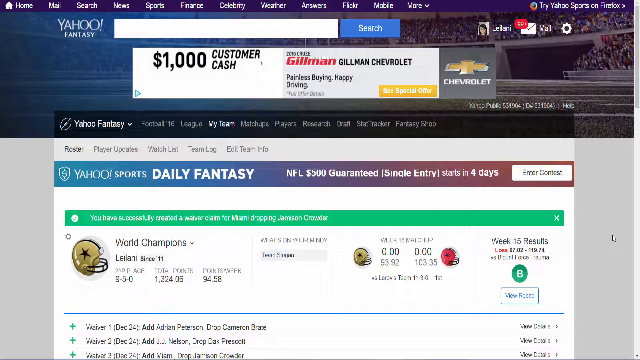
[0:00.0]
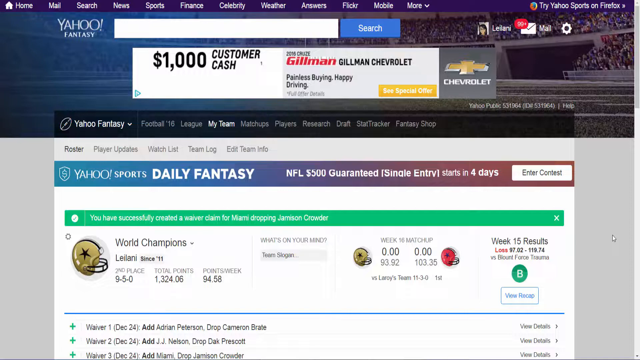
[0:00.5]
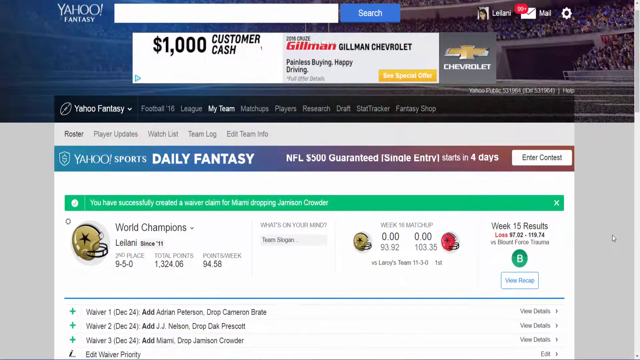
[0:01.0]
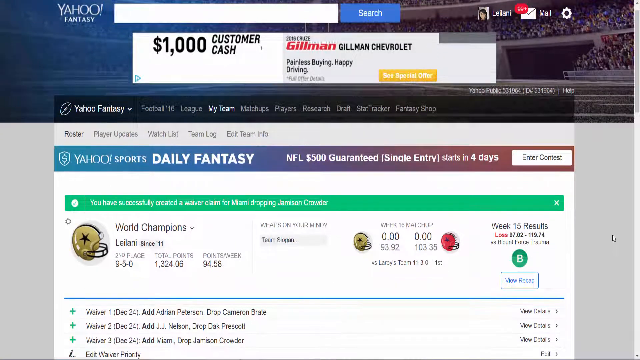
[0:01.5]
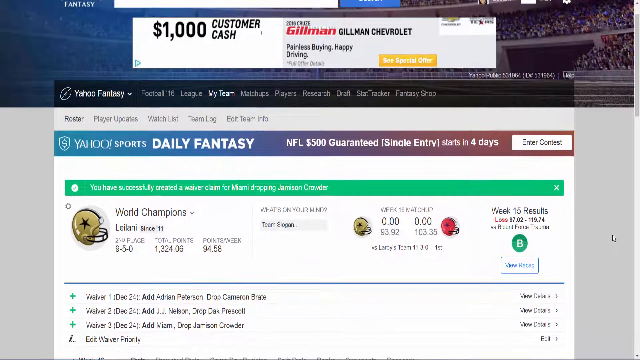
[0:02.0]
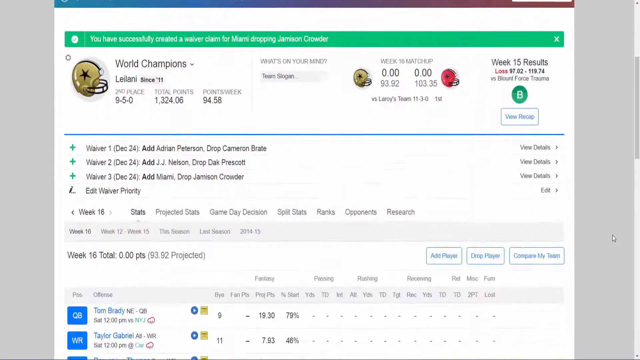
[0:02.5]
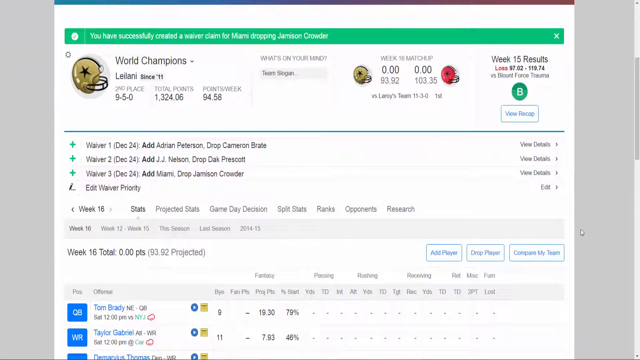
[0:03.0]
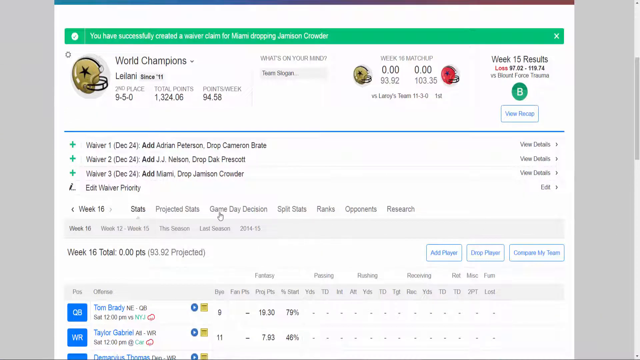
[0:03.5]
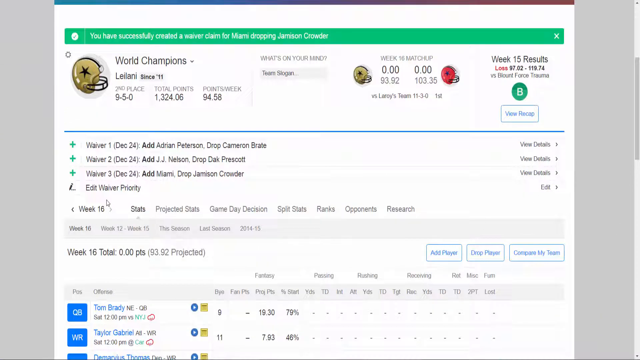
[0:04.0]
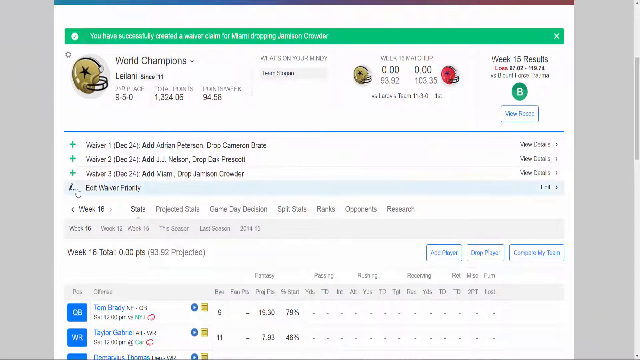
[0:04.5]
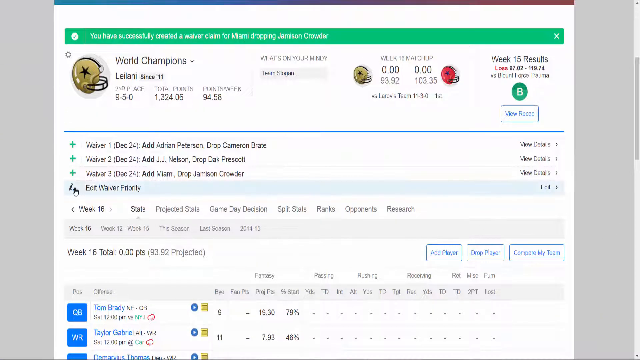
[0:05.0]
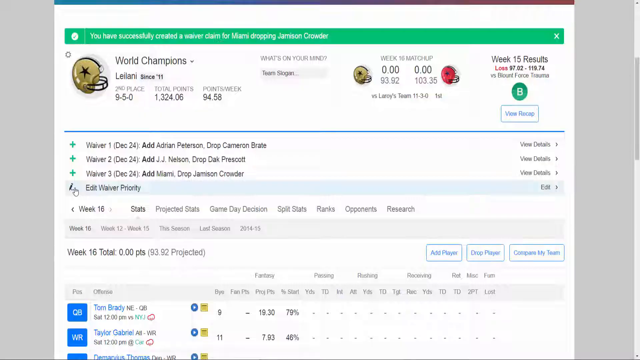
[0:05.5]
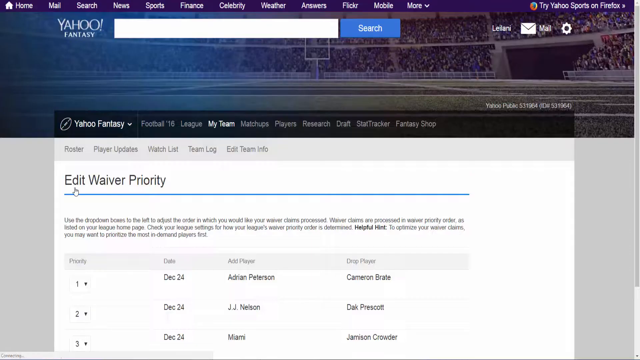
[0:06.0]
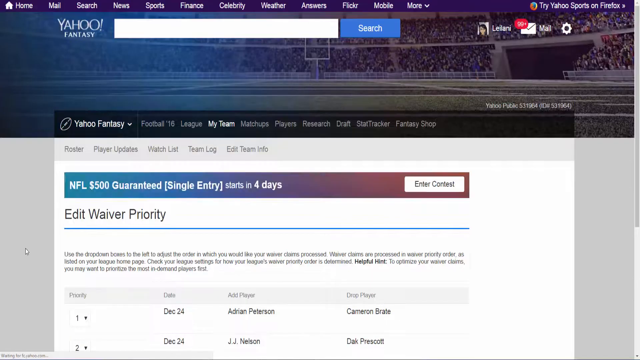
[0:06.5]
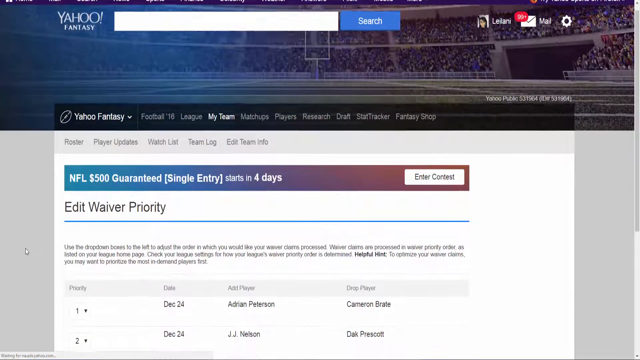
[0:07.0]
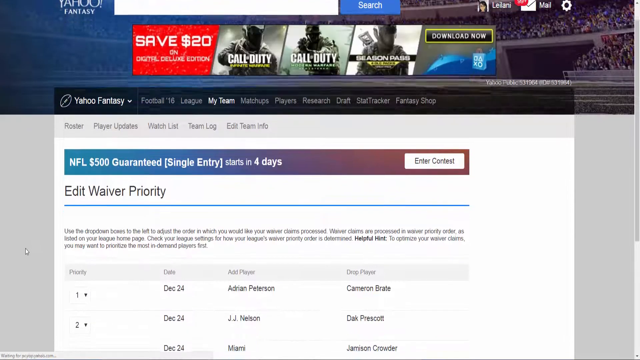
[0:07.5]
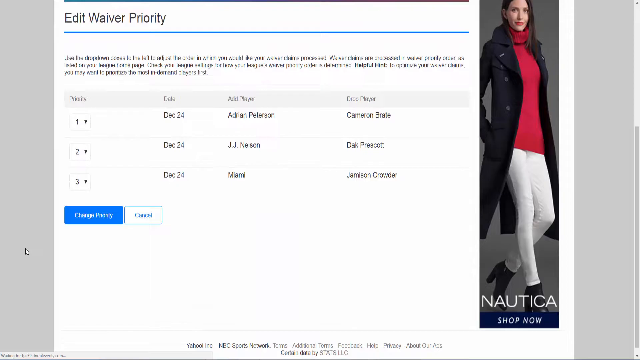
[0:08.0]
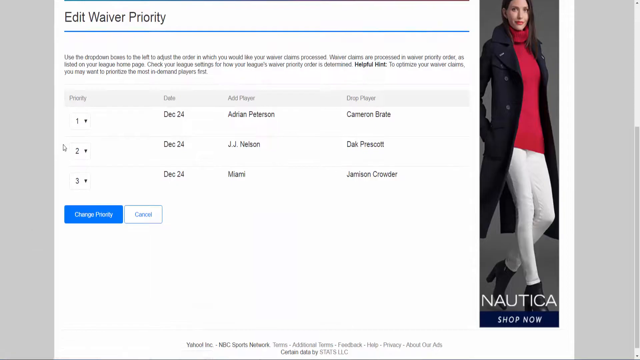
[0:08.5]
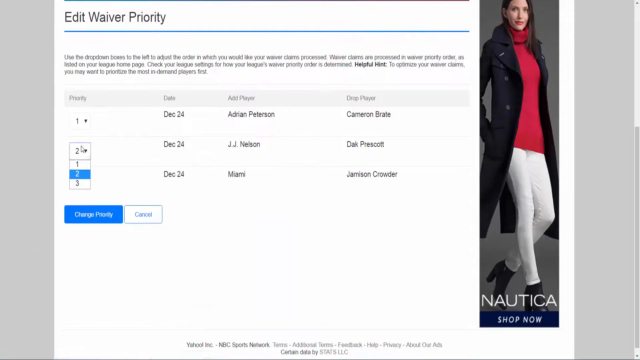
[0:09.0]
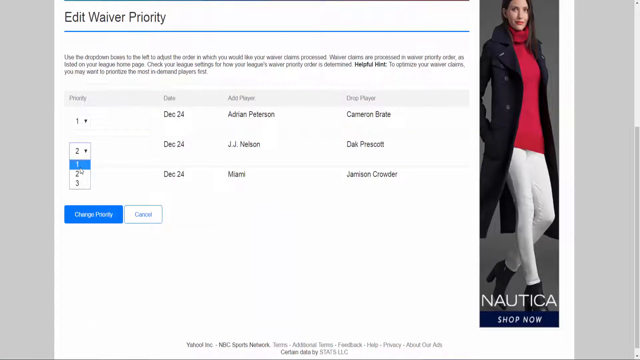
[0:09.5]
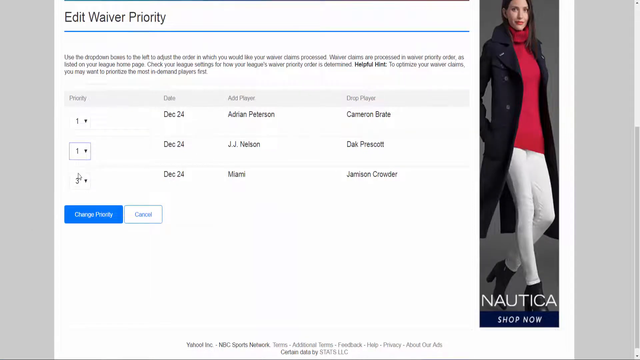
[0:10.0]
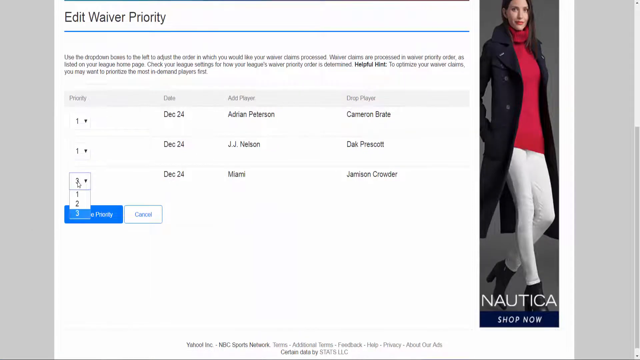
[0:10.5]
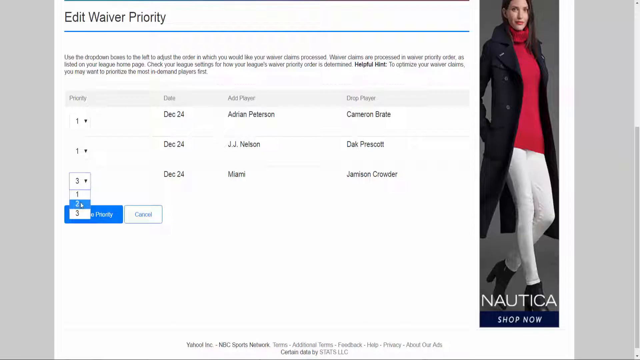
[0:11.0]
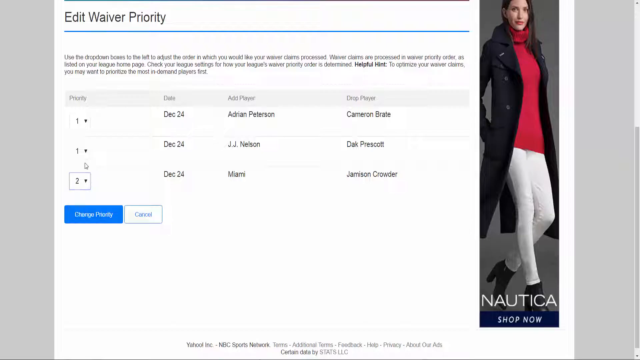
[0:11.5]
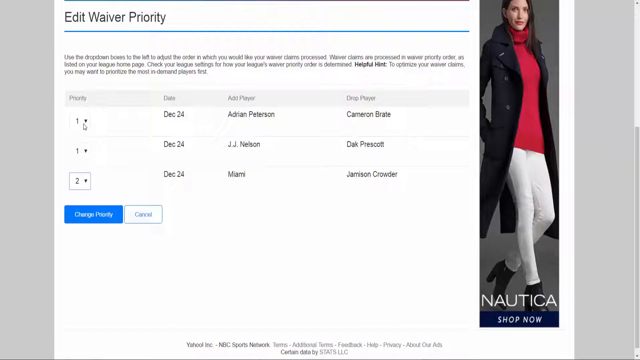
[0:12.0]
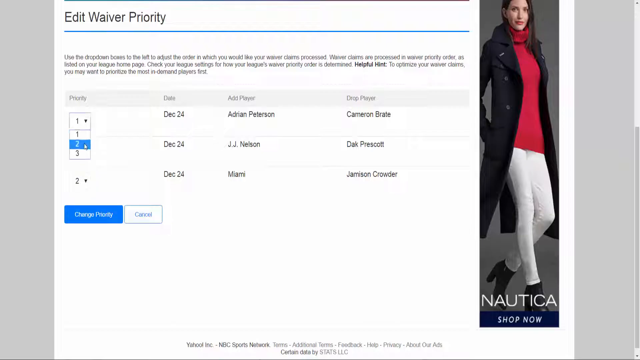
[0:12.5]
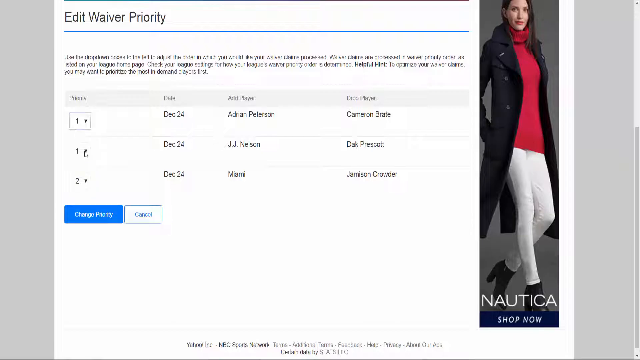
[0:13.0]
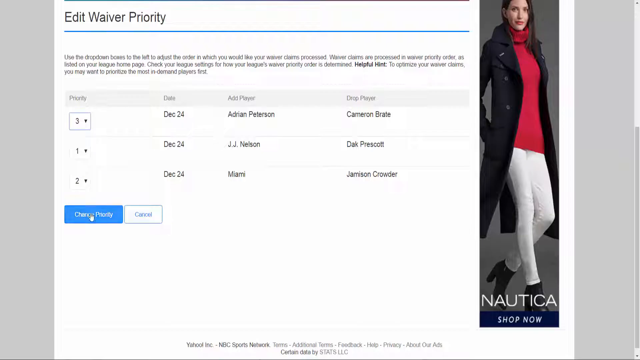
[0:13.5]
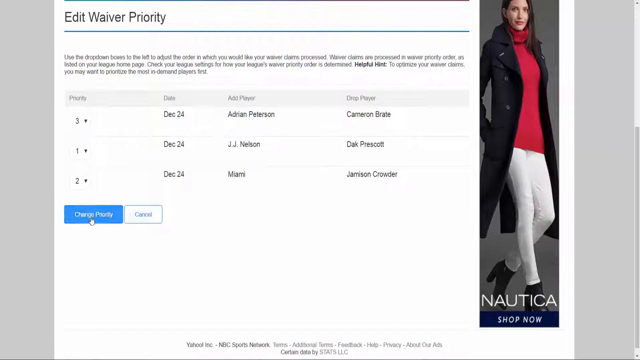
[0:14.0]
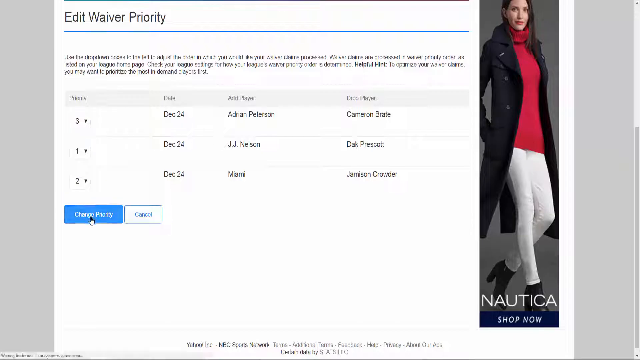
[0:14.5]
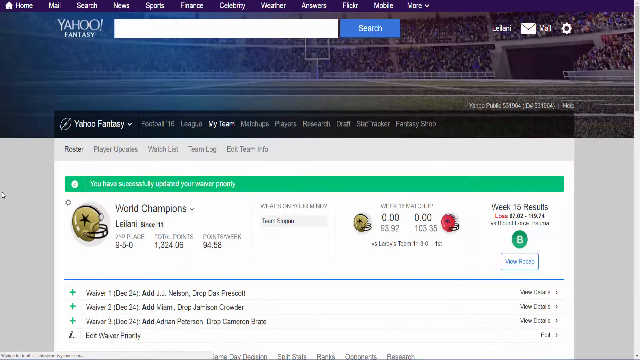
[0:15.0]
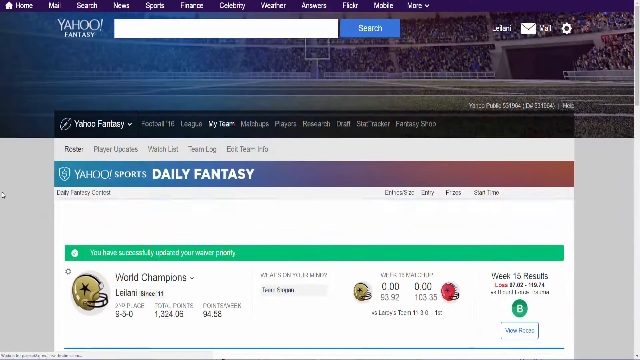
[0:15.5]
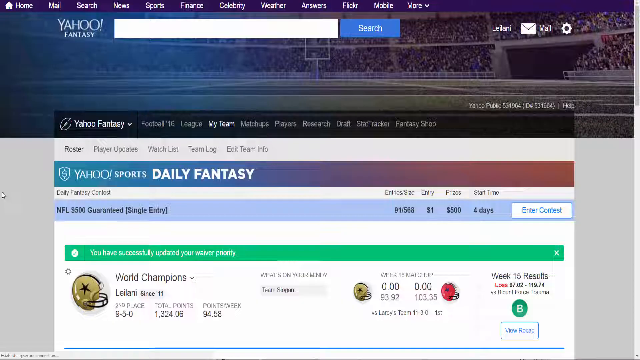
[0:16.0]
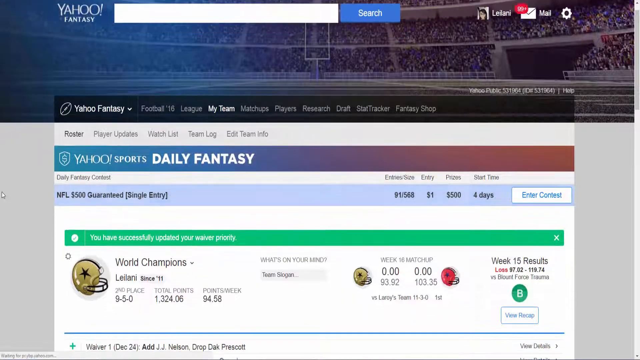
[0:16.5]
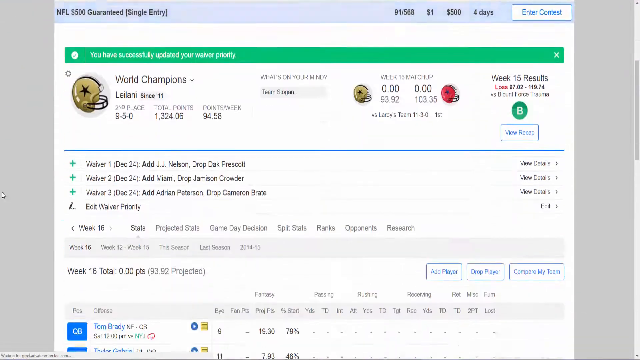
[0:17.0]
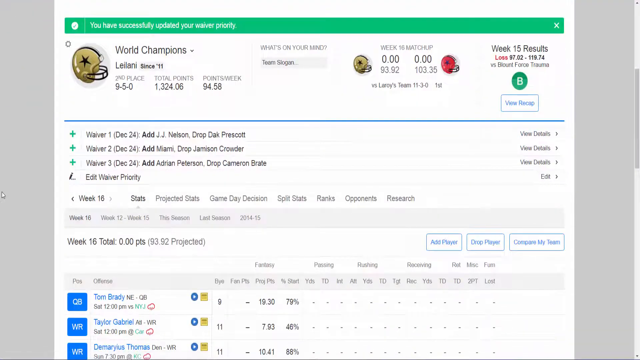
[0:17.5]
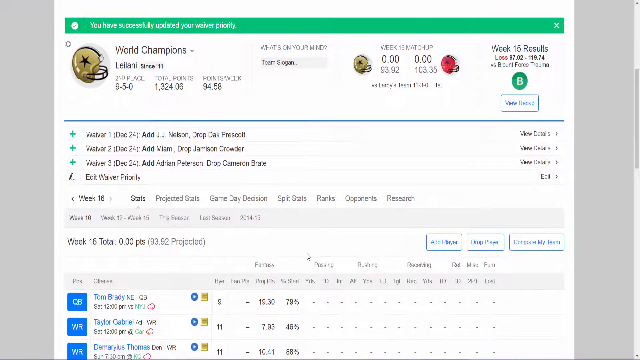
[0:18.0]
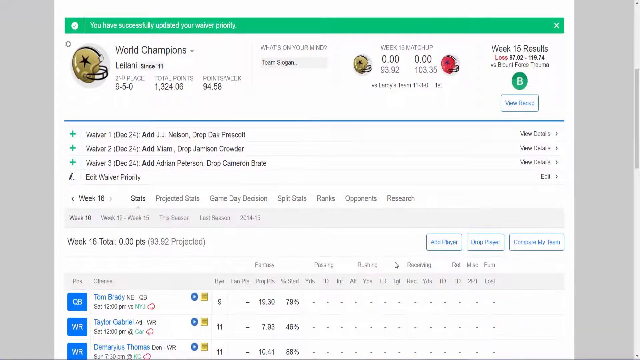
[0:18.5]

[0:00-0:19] The screen shows Yahoo Fantasy Sports, where the user's current team is called World Champions. The season is 2011, and the team is playing its Week 16 matchup after losing Week 15; it apparently looks set to lose Week 16 as well. The user wants to pick up Adrian Peterson, JJ Nelson and the Miami Defense, and to drop Cameron Brait, Dak and Jamison Crowder. The user changes the waiver priority for the pickups, setting JJ Nelson to 1, Miami Defense to 2 and Adrian Peterson to 3, and the waiver priority in Fantasy Football is updated. The username is Leilani, and there are a large number of unopened emails, shown as 99+. The page has a Saints color scheme of gold and black. The team is in second place with a 9 and 5 record and 94.58 points per week.